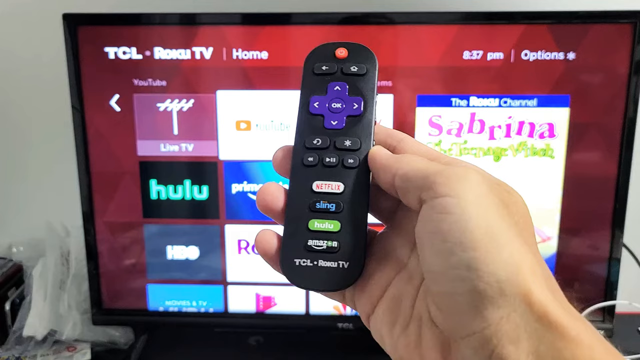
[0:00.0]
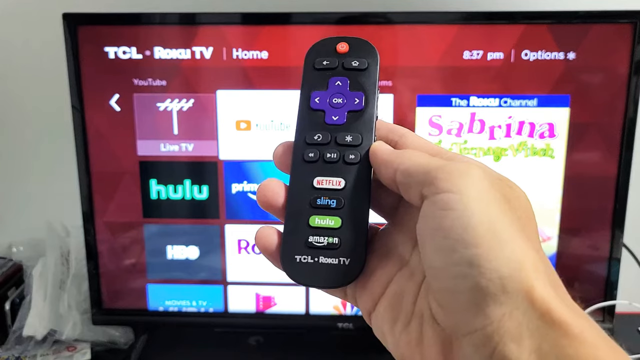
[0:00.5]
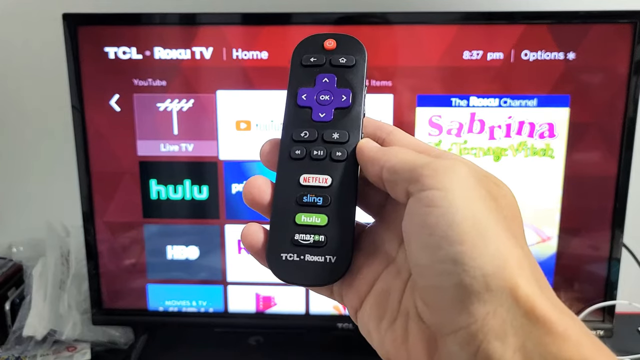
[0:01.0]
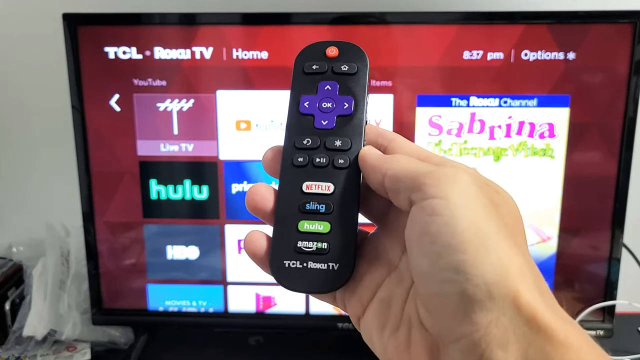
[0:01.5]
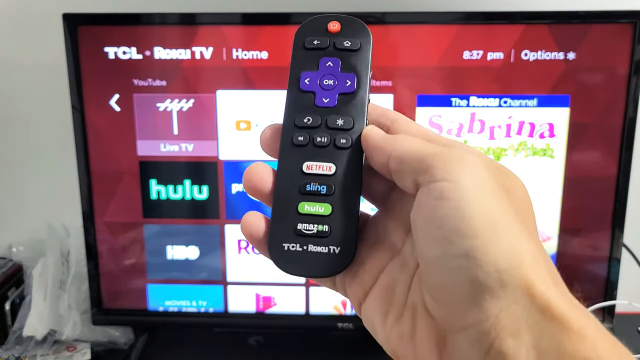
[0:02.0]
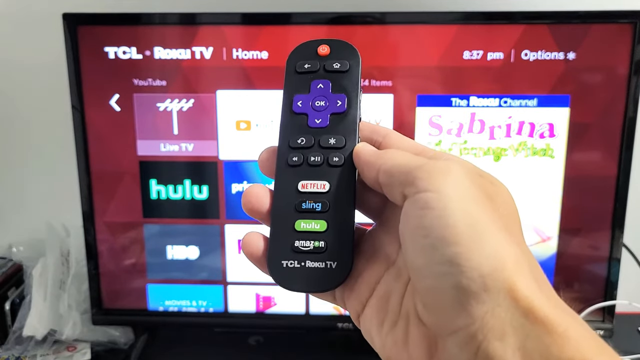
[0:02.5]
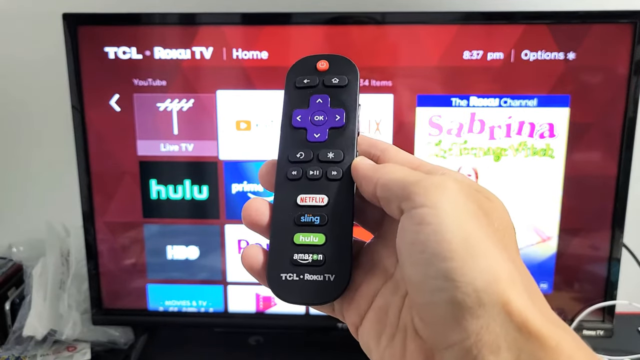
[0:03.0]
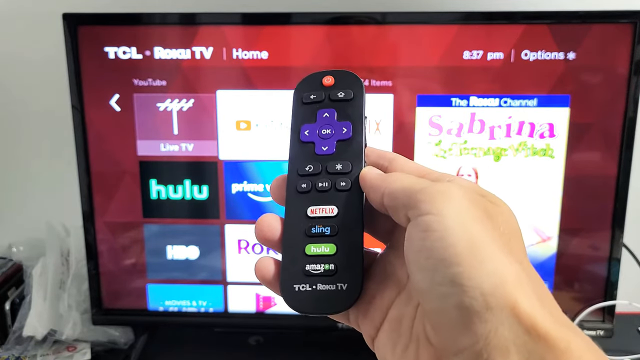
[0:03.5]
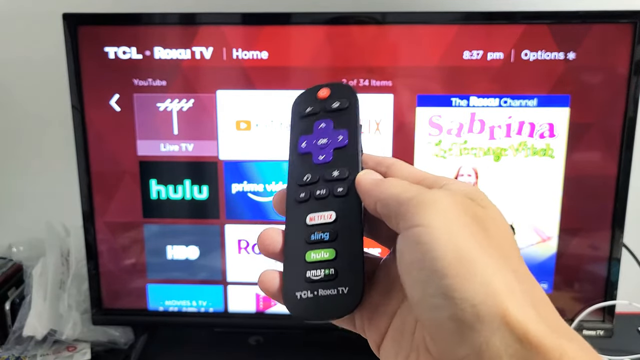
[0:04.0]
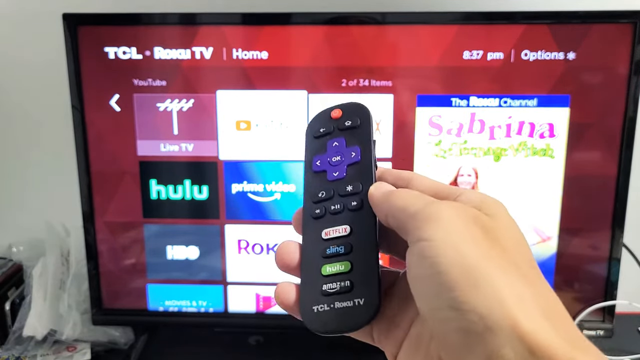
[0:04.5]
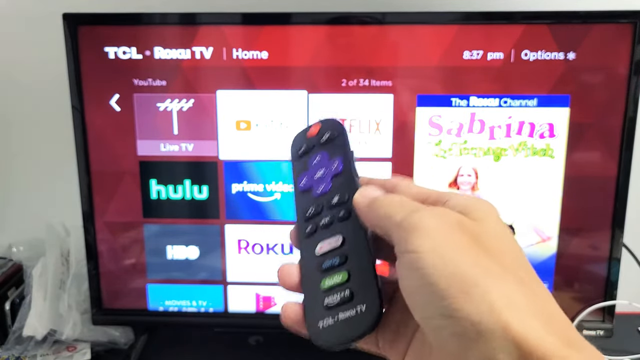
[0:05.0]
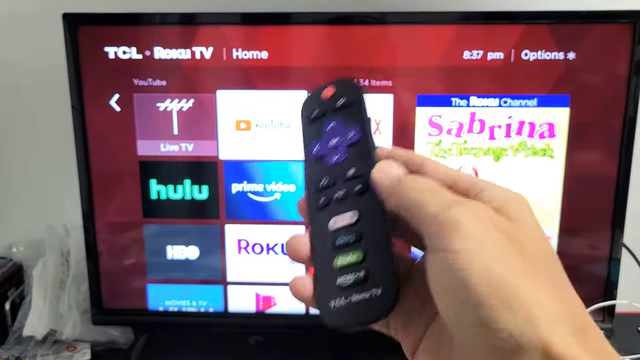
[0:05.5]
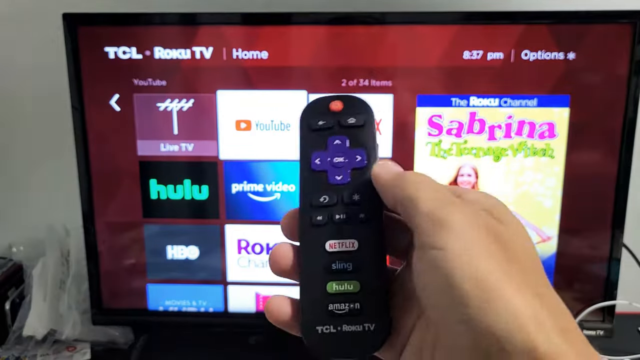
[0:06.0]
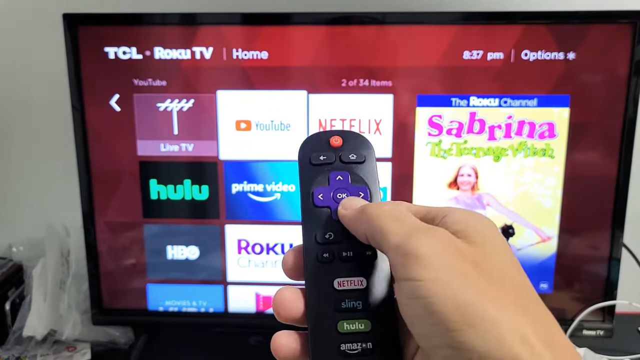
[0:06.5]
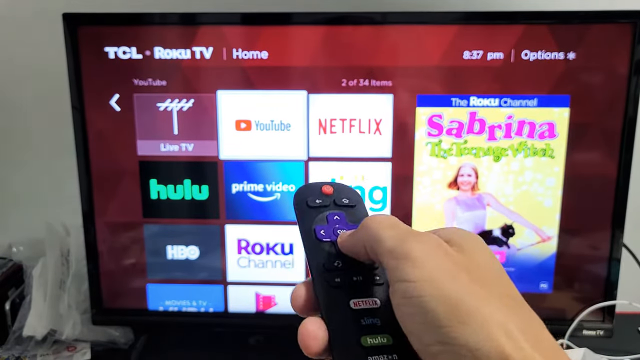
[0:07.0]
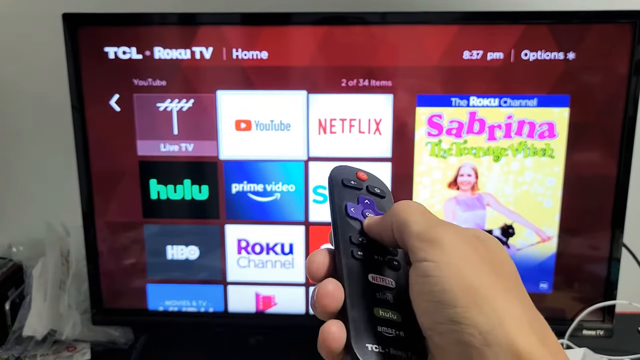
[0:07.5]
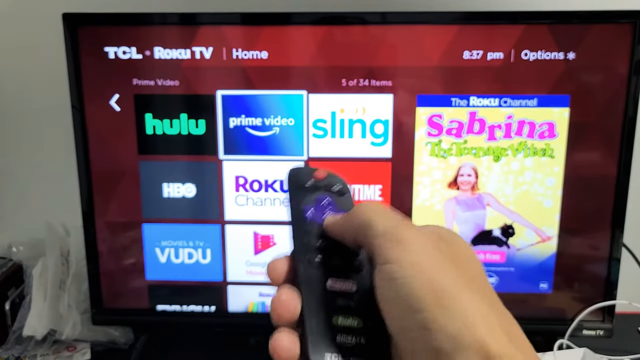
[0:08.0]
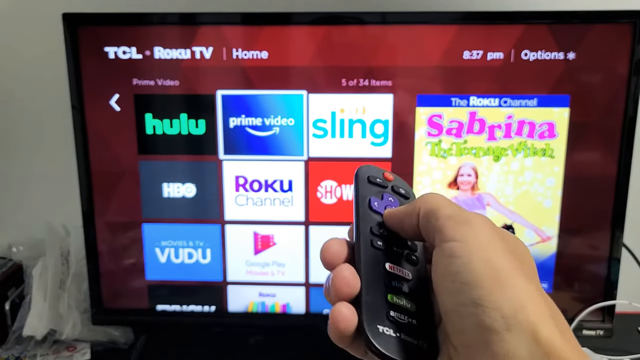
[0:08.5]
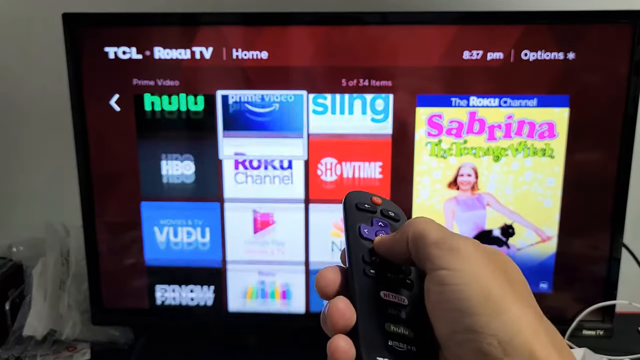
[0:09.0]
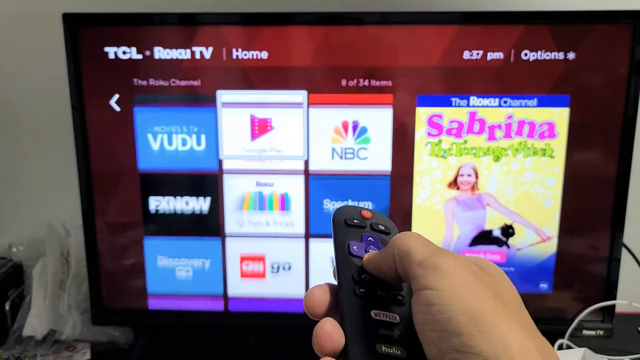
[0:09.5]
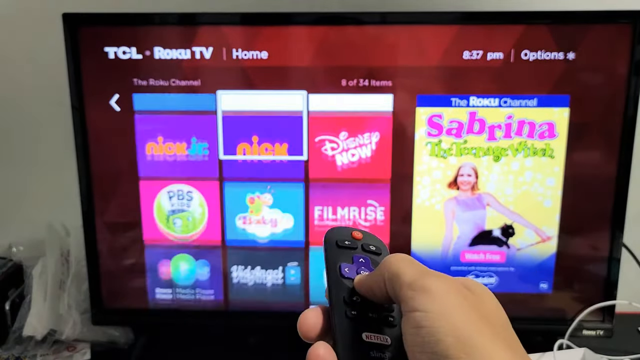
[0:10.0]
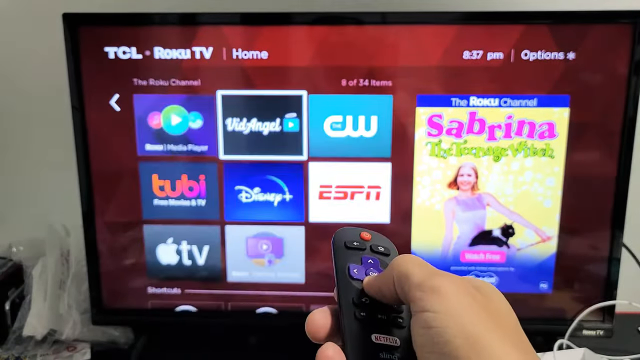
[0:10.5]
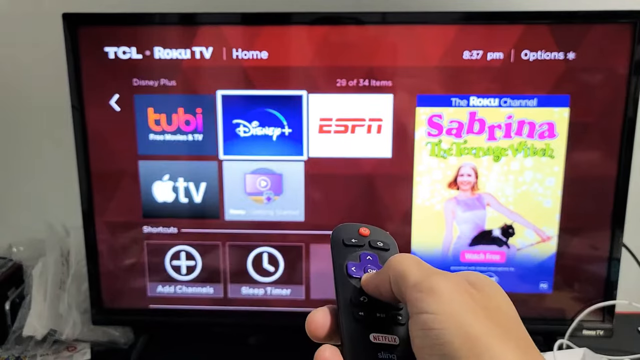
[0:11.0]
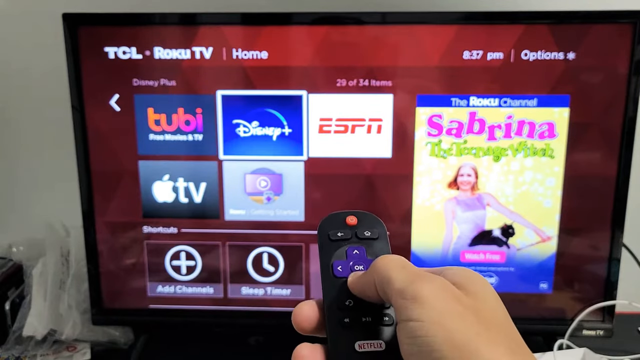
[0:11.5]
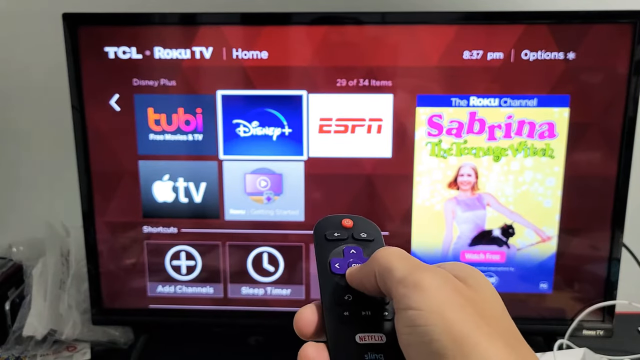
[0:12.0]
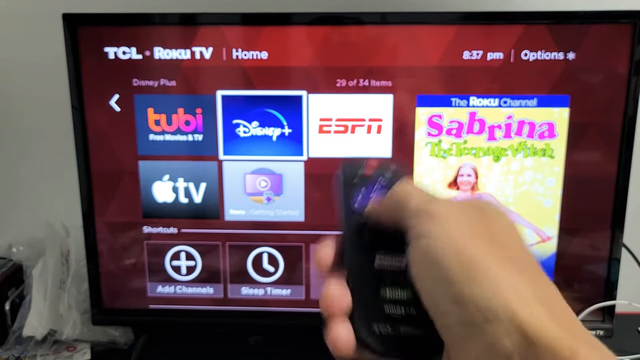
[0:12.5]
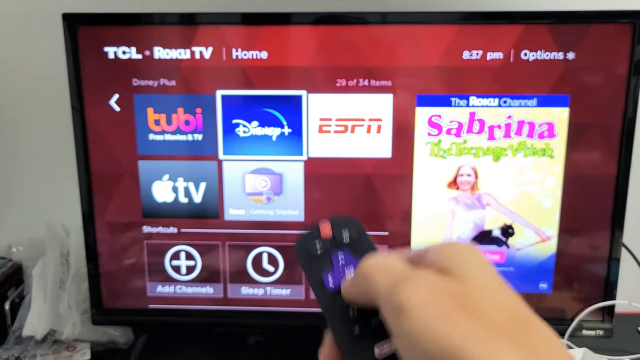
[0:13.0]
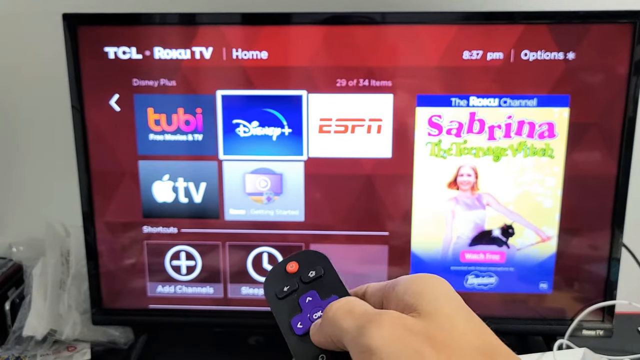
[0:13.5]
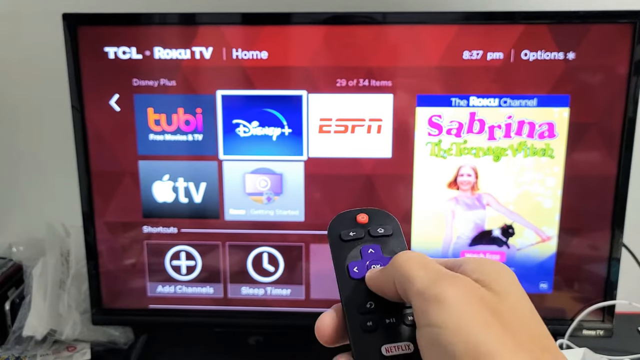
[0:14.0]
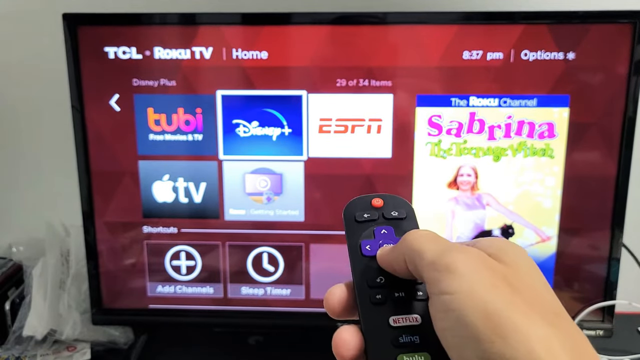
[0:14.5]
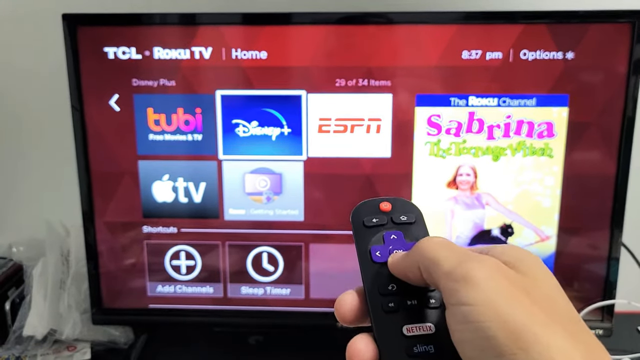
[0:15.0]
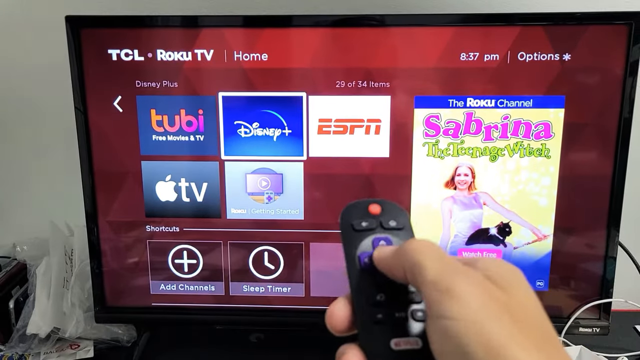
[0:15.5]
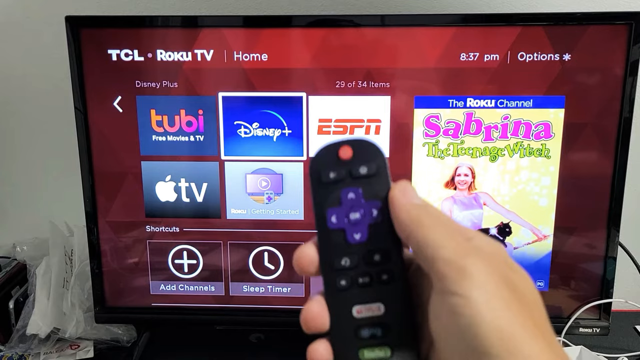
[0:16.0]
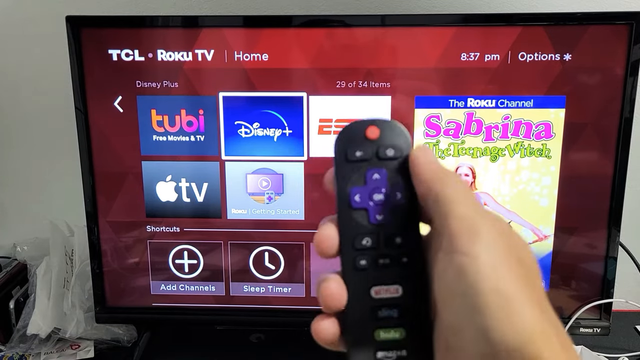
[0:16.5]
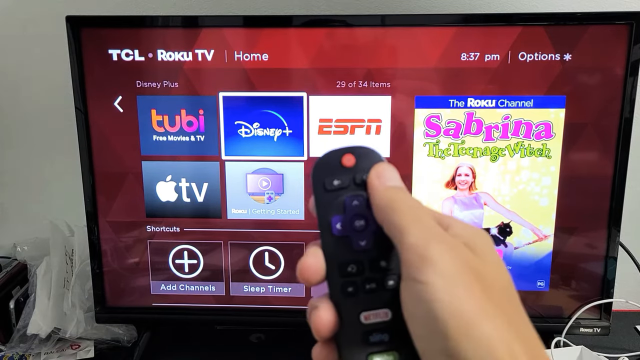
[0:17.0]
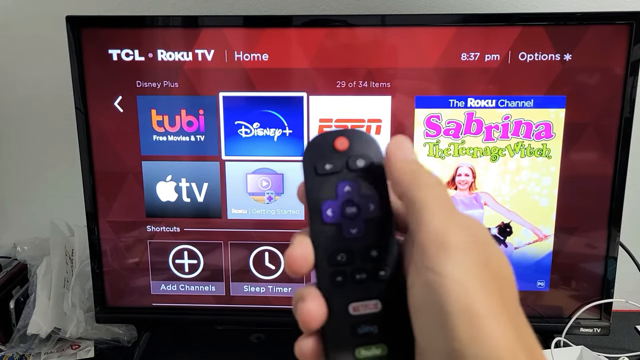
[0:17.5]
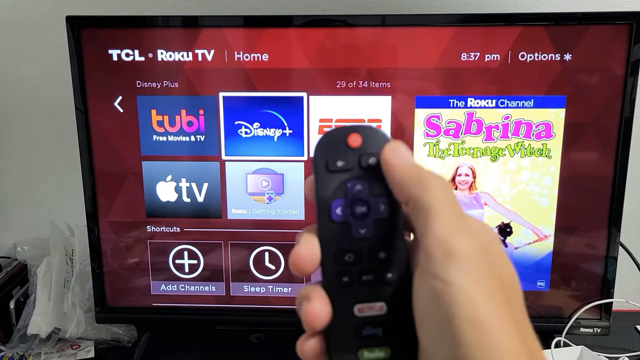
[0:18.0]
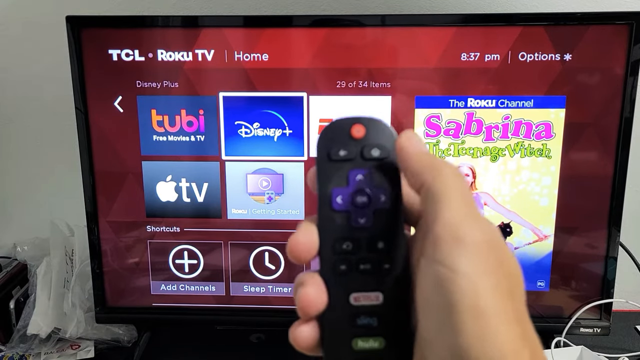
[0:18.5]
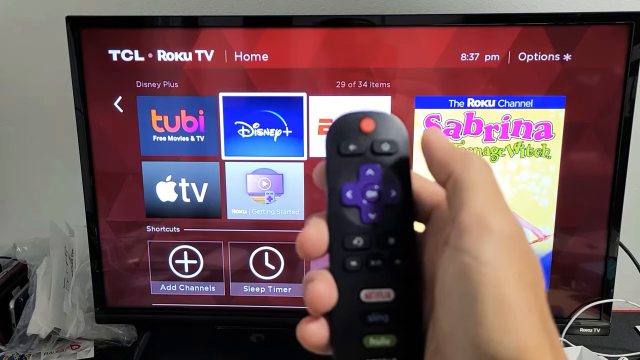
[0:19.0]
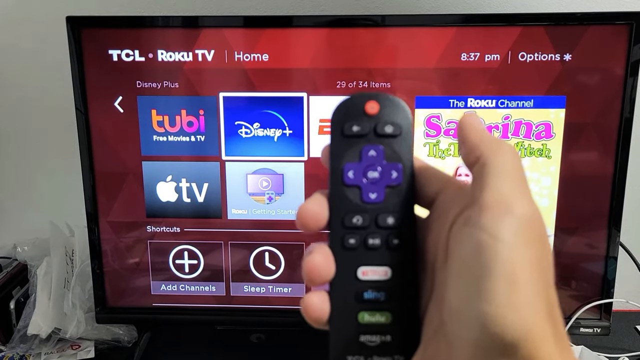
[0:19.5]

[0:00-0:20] A TV in the background displays its home screen with the apps that come preloaded on it; it is a TCL brand Roku TV, and it is on the home page. In front of it, what appears to be a man's hand holds a remote. The remote has a red power button at the top. A little further down is a set of blue buttons with four arrows (up, down, left and right) and "OK" in the center. At the bottom are four horizontally oval buttons that link directly to specific streaming networks: Netflix, followed by Sling, Hulu and Amazon.